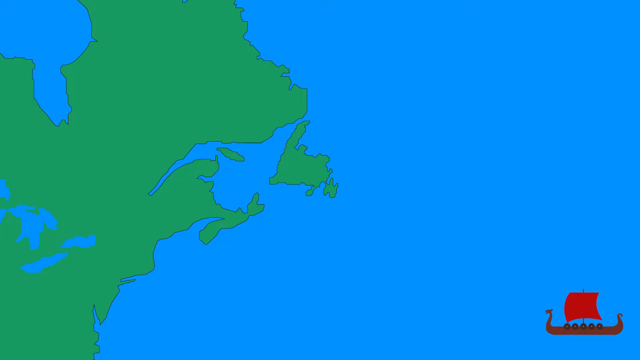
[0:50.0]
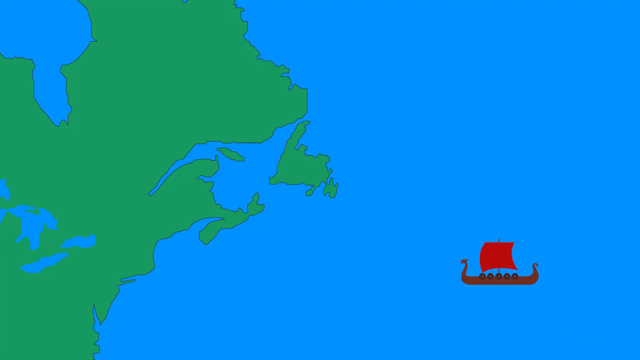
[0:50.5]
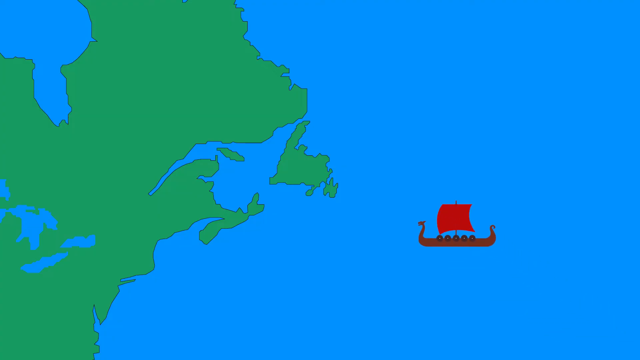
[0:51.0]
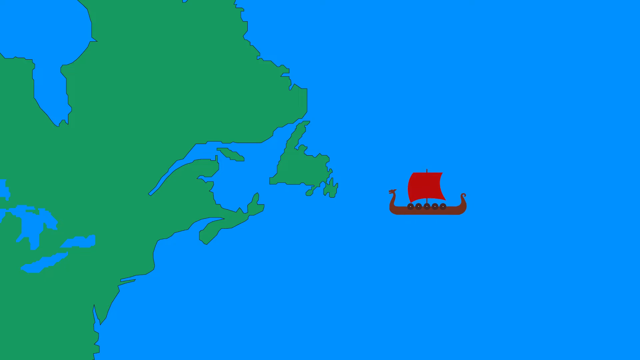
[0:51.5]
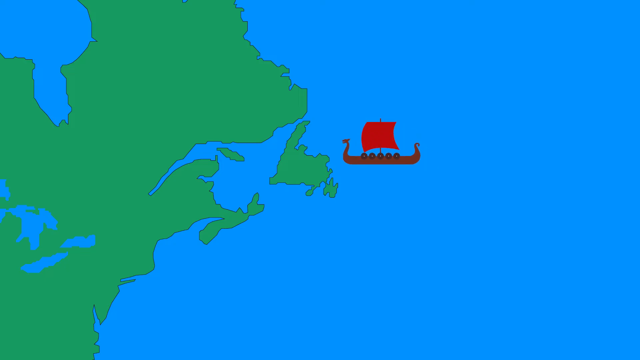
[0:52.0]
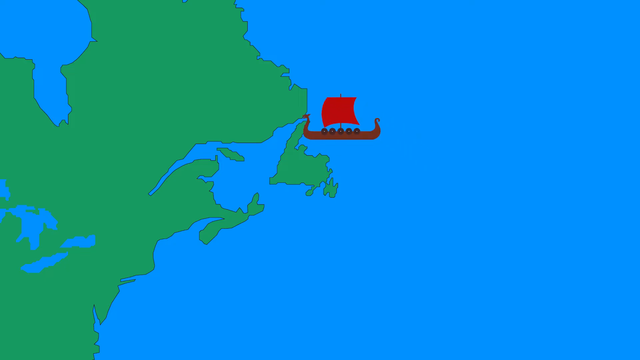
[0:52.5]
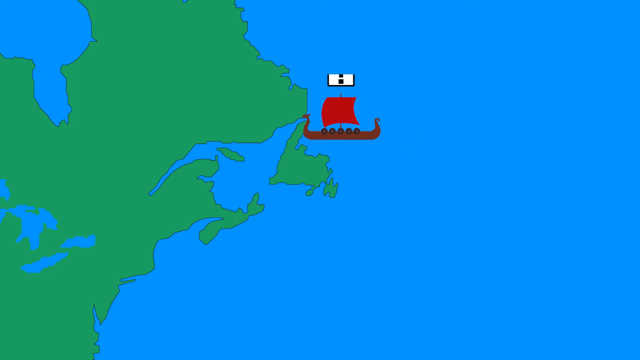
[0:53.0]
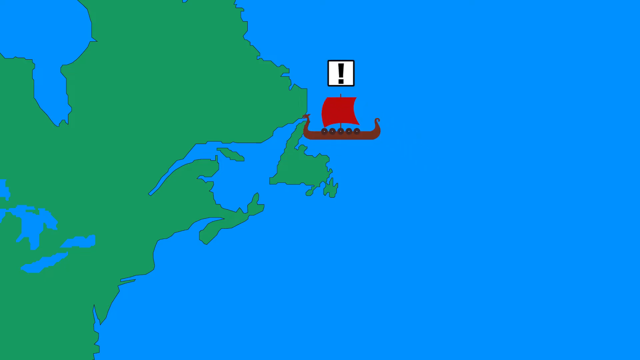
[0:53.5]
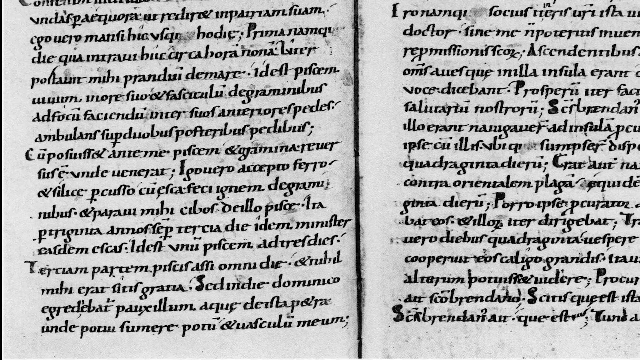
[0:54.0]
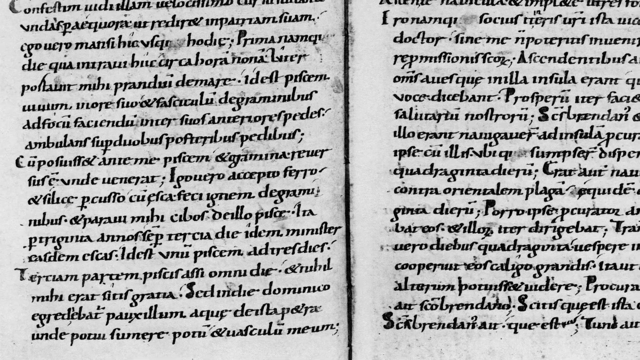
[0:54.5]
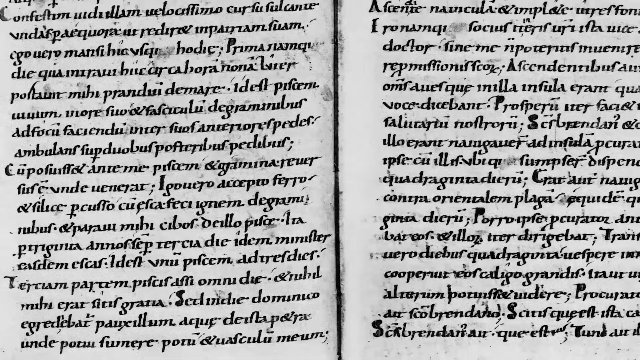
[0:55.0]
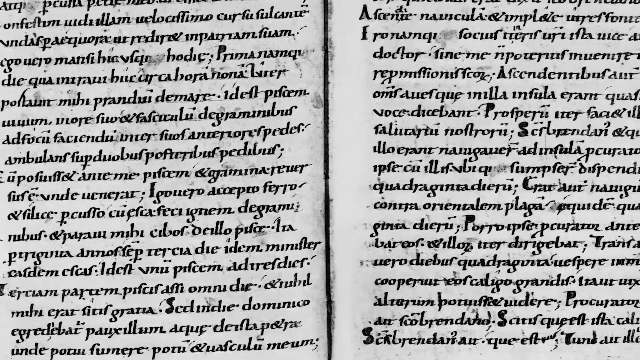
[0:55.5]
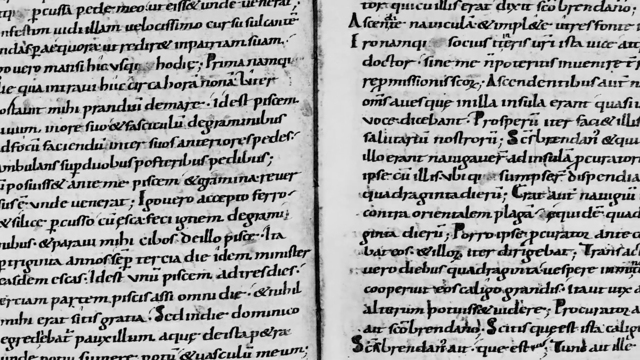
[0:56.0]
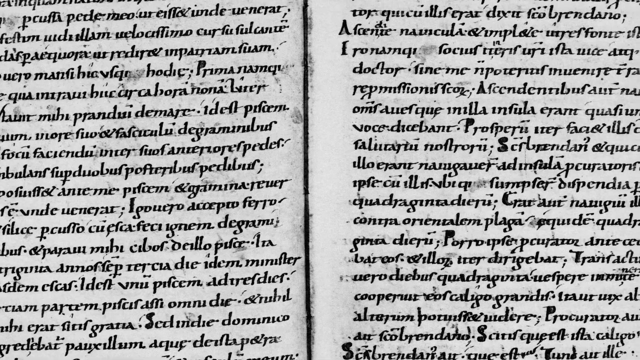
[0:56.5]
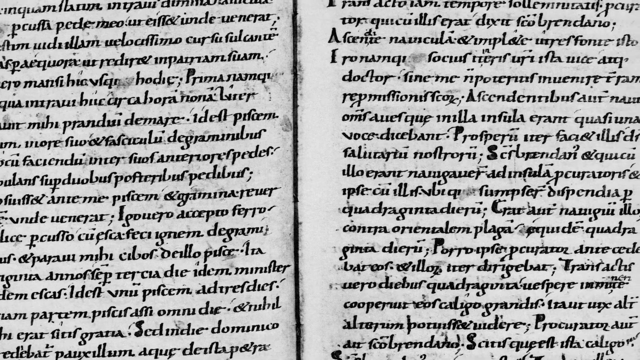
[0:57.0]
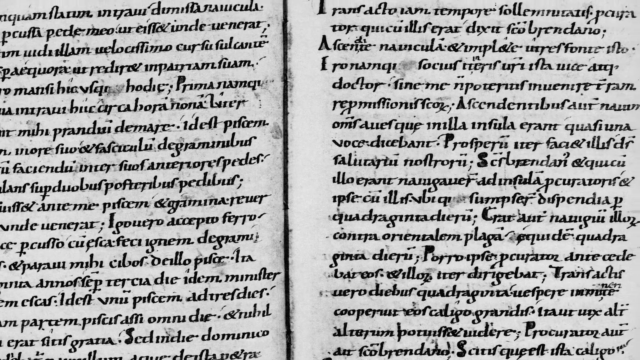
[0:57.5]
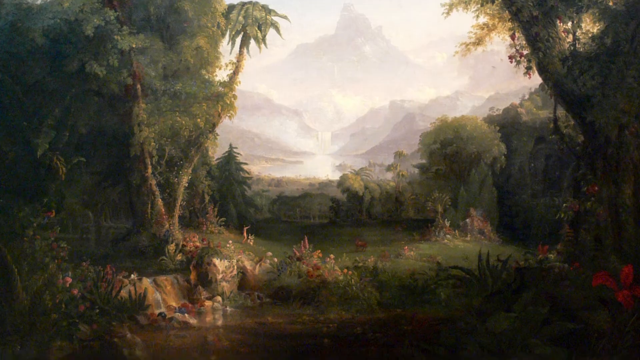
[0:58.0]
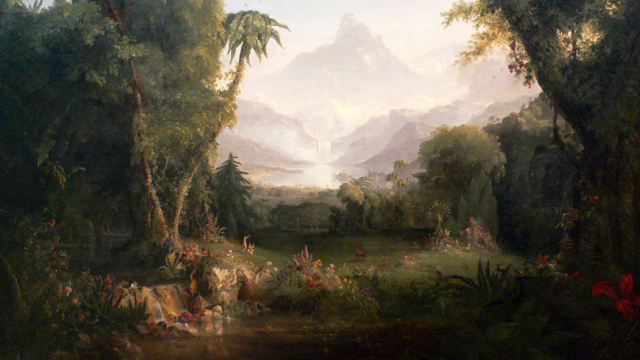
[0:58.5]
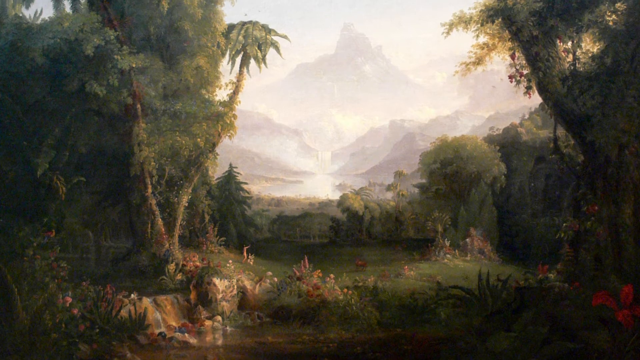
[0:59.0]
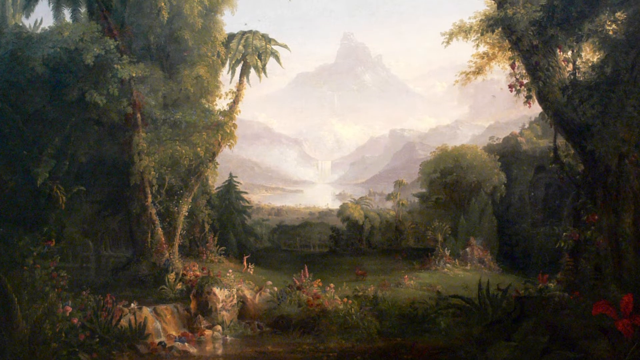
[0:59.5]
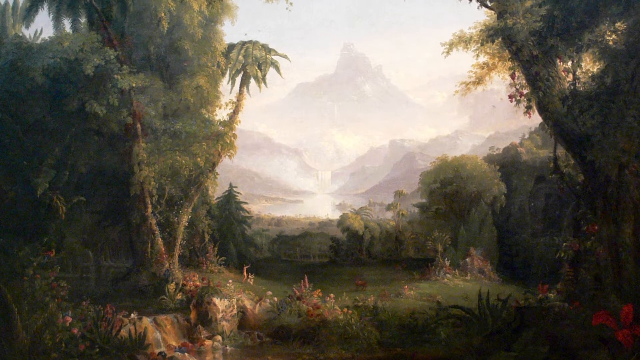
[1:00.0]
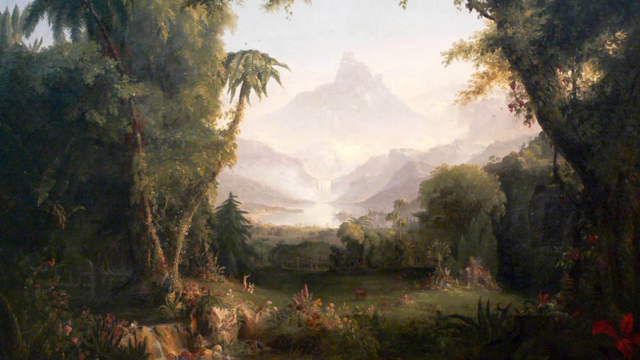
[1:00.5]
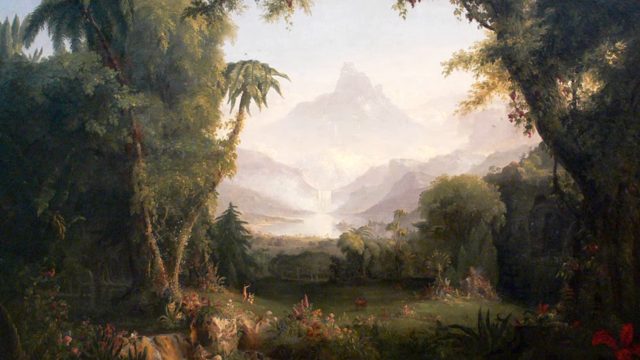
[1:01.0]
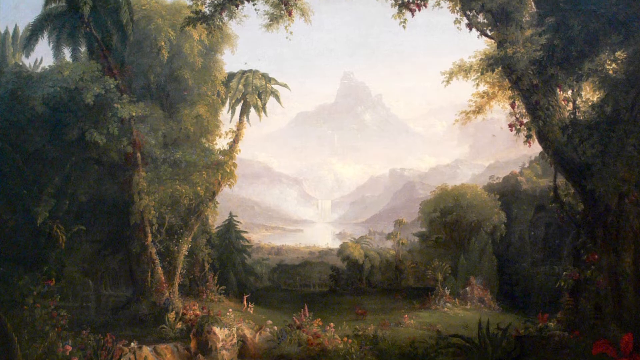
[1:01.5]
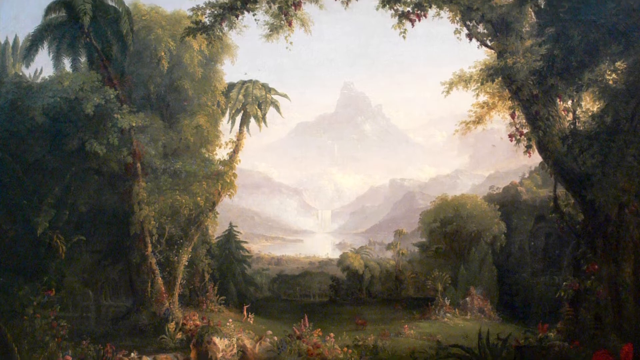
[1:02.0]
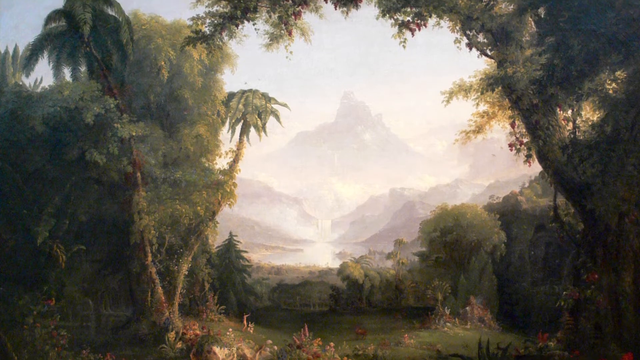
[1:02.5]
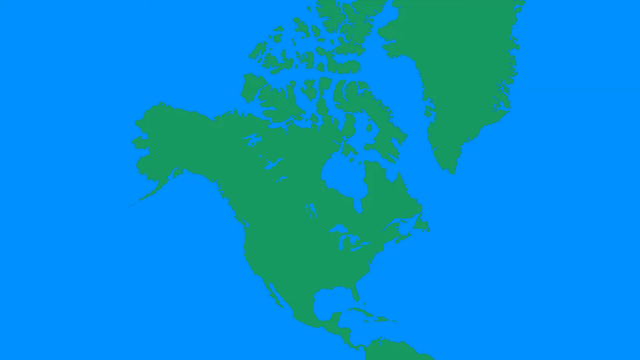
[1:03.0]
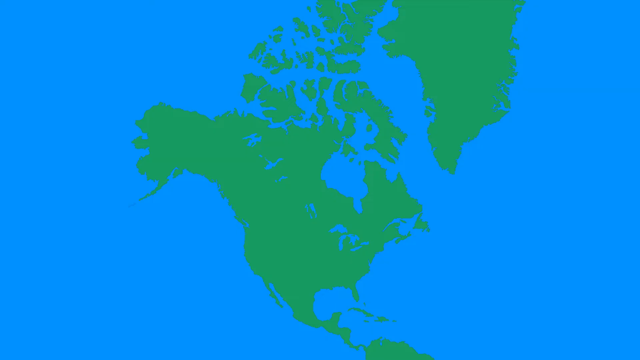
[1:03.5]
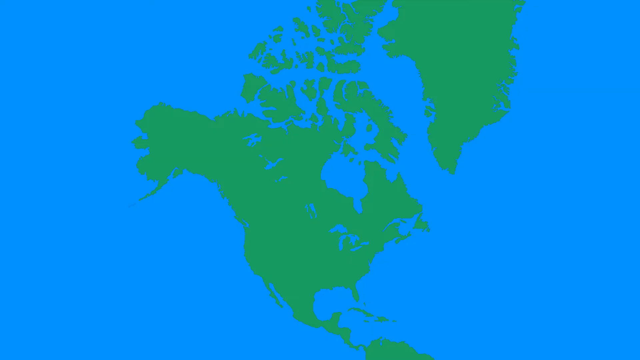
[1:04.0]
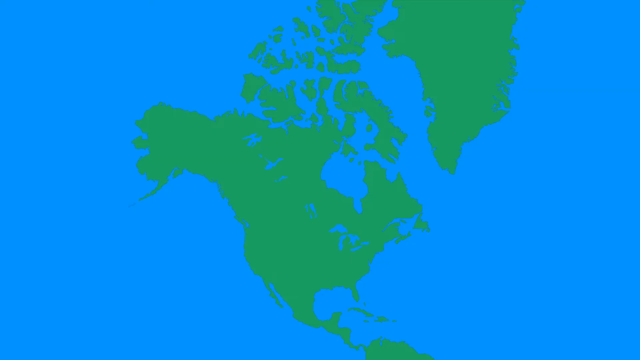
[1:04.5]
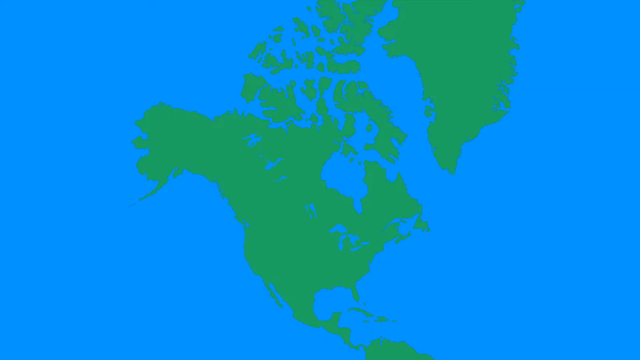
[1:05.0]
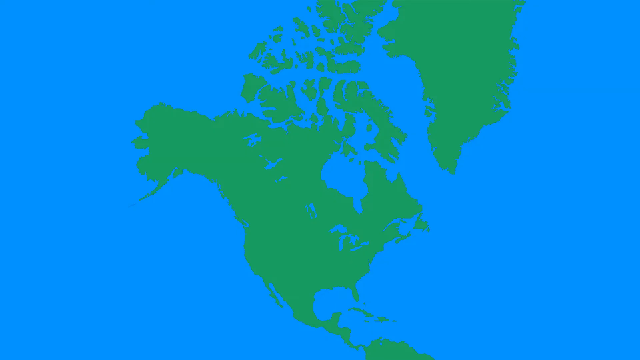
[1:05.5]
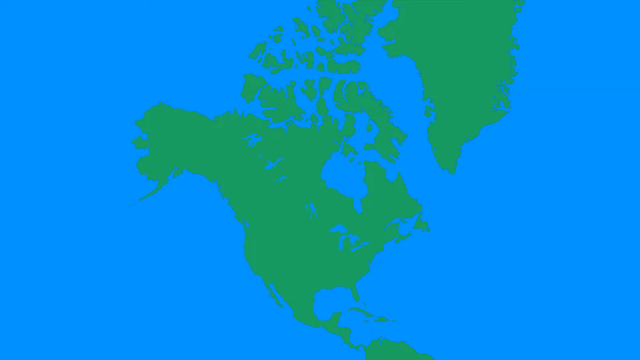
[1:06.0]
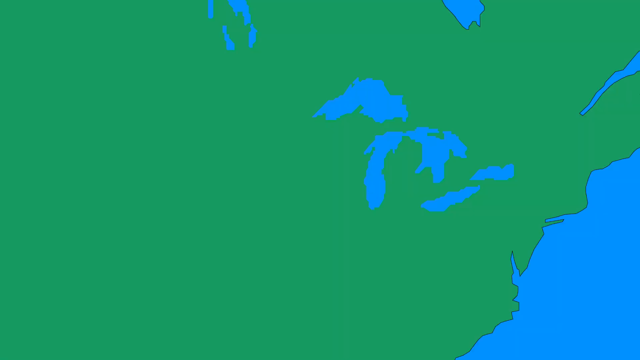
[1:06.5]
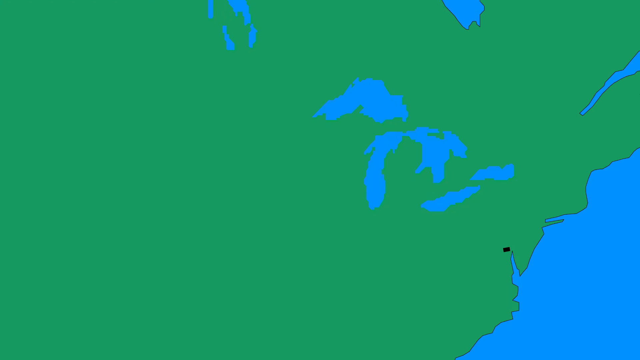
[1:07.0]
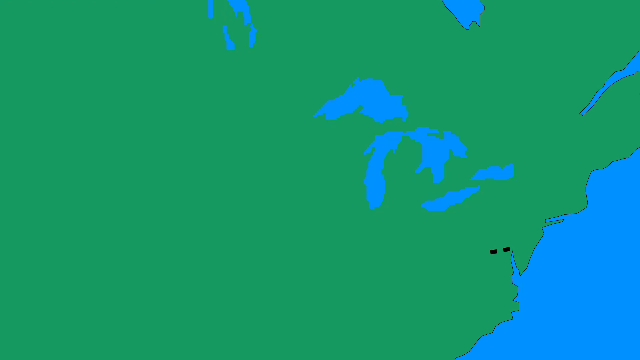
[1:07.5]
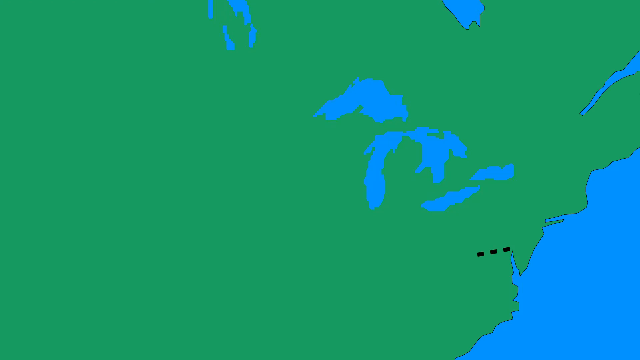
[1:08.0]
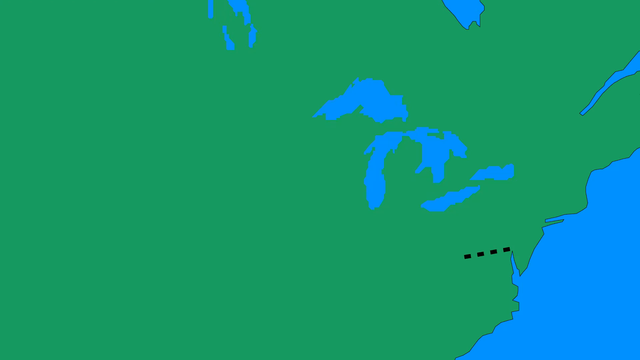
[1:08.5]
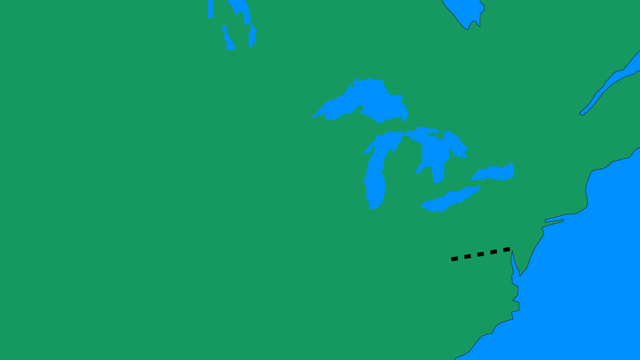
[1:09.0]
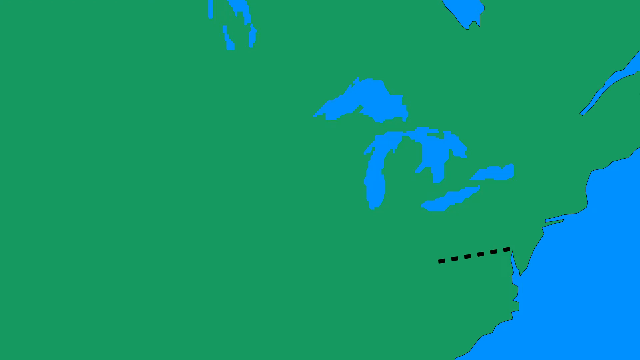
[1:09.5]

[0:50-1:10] In a cartoon-style scene, a wooden boat with a red sail approaches a coastline of the Americas. A question mark then pops up above the boat. Next, the open pages of a book appear, written in a foreign language that looks like it could be Latin or another ancient language. A painting of a very lush meadow follows, with trees, grasses and bushes growing everywhere, looking very tropical. Then a map shows the United States, North America, South America and Greenland. The view changes to the east coast of the United States, where a black dotted line shows a trail leading from the coast.